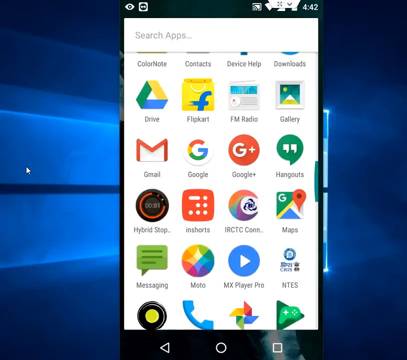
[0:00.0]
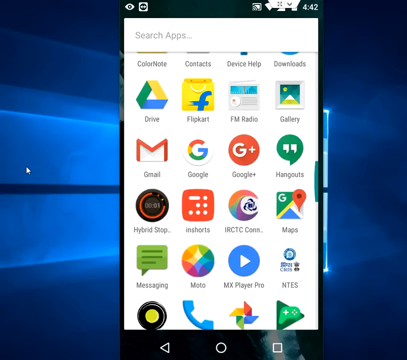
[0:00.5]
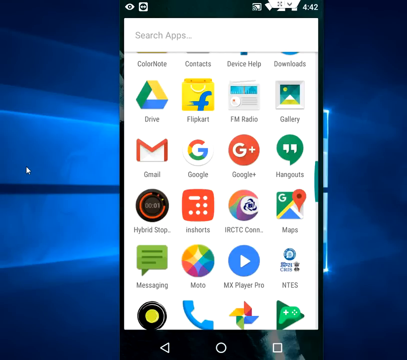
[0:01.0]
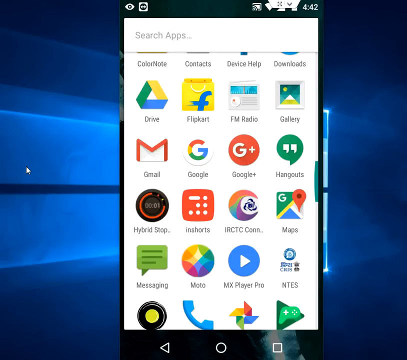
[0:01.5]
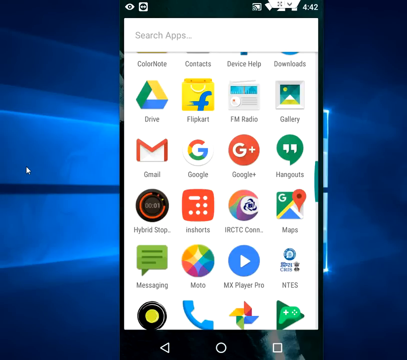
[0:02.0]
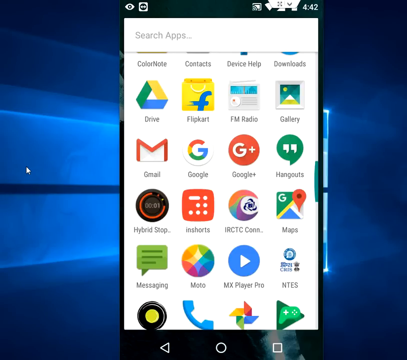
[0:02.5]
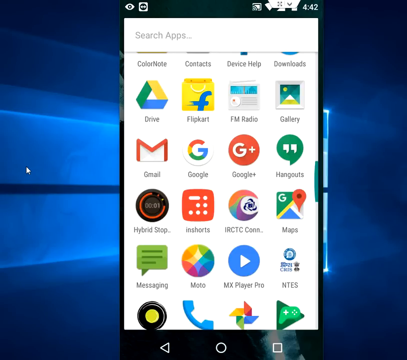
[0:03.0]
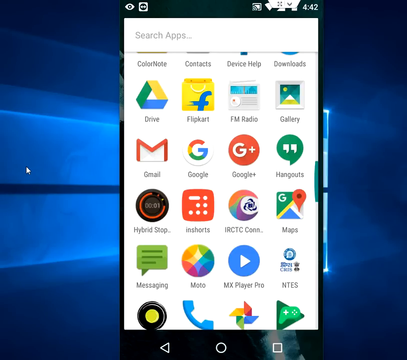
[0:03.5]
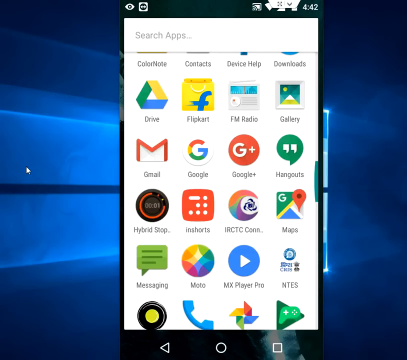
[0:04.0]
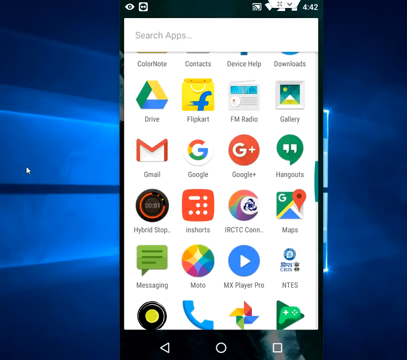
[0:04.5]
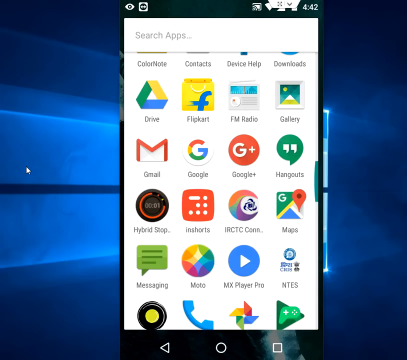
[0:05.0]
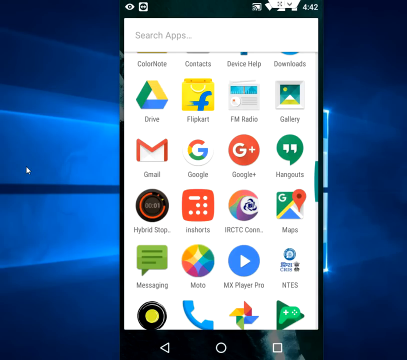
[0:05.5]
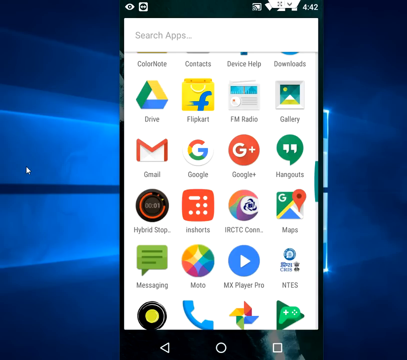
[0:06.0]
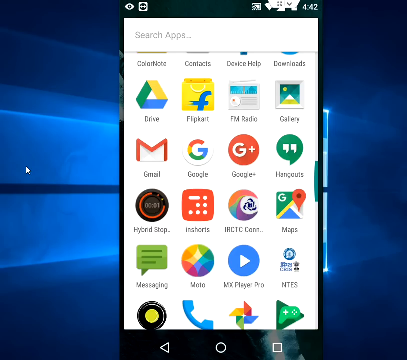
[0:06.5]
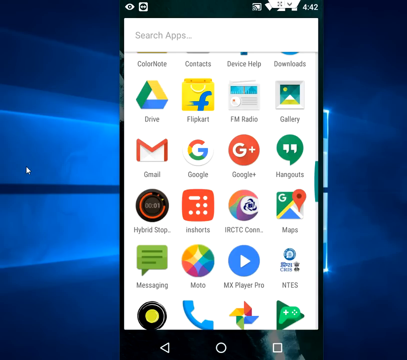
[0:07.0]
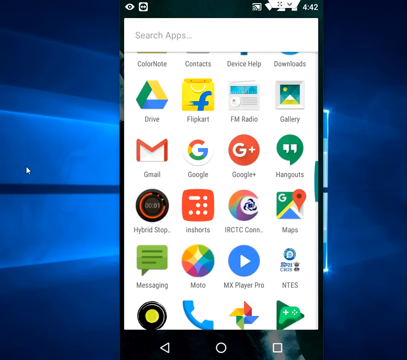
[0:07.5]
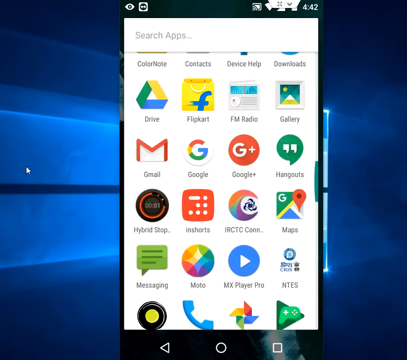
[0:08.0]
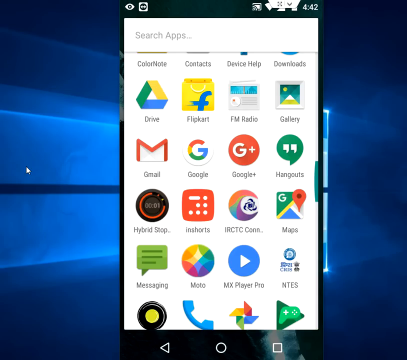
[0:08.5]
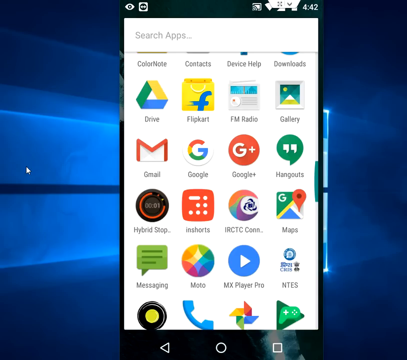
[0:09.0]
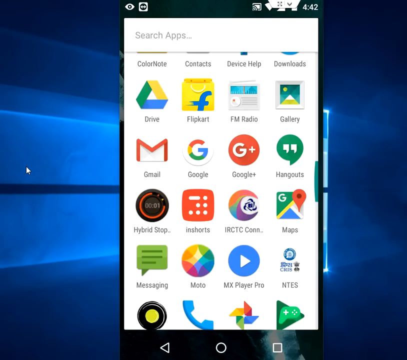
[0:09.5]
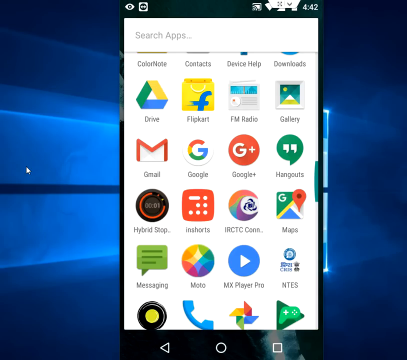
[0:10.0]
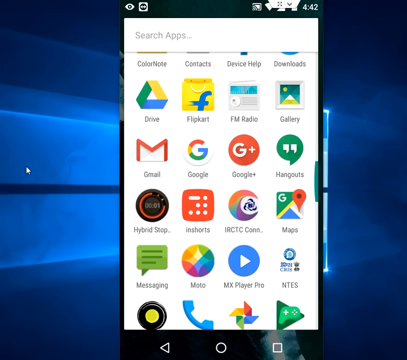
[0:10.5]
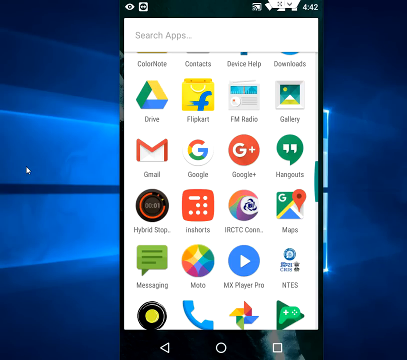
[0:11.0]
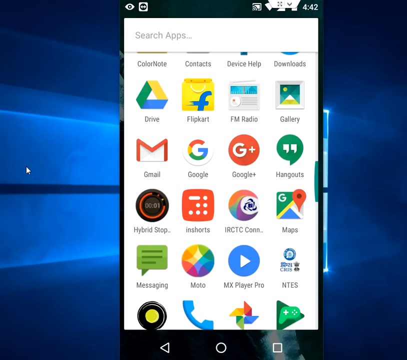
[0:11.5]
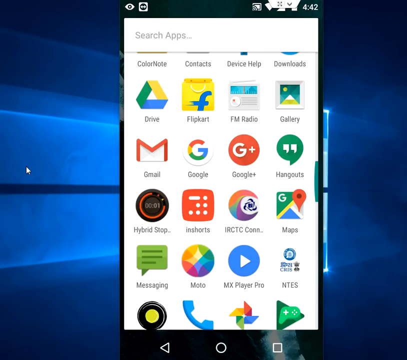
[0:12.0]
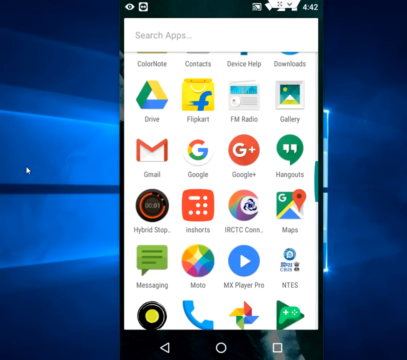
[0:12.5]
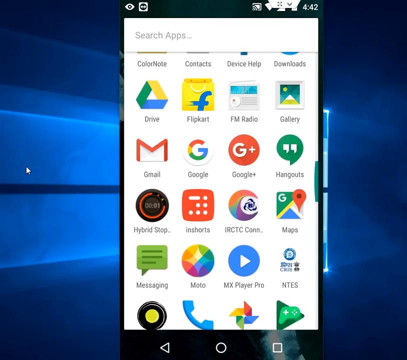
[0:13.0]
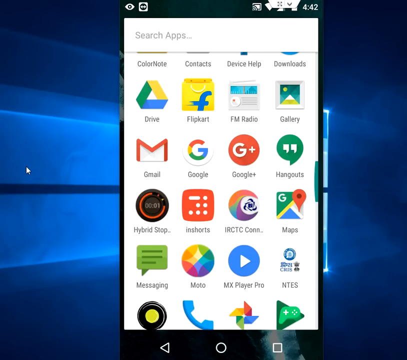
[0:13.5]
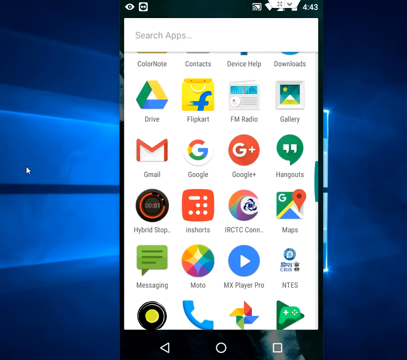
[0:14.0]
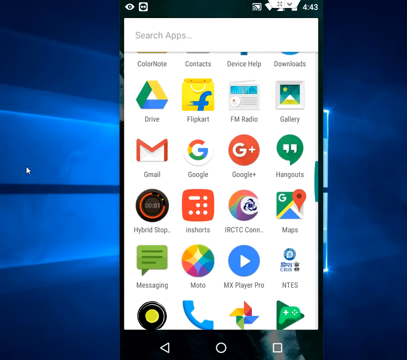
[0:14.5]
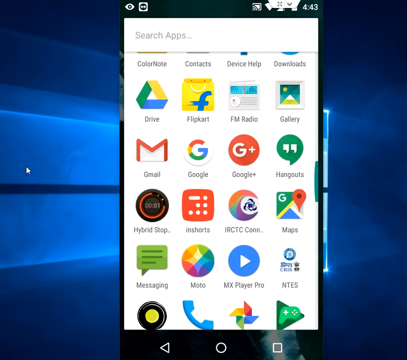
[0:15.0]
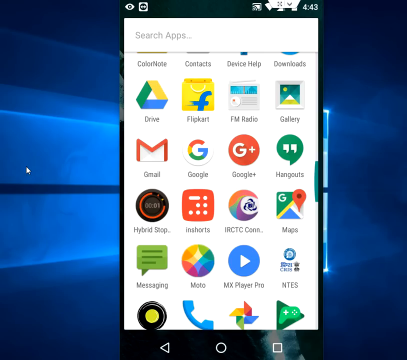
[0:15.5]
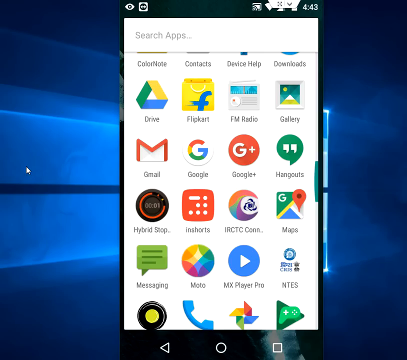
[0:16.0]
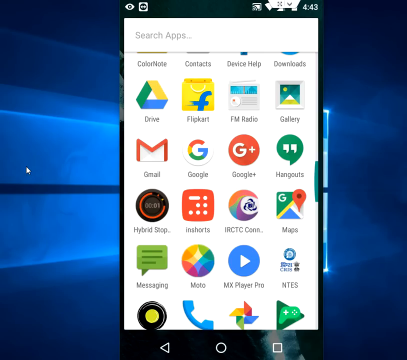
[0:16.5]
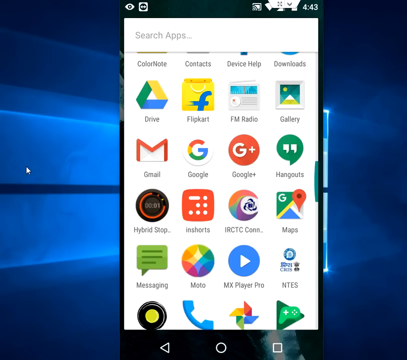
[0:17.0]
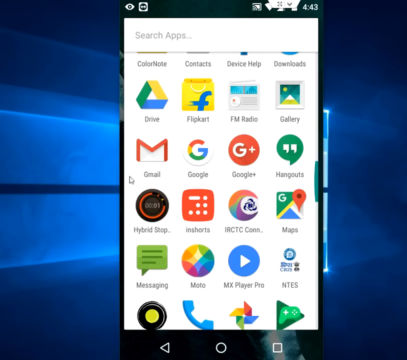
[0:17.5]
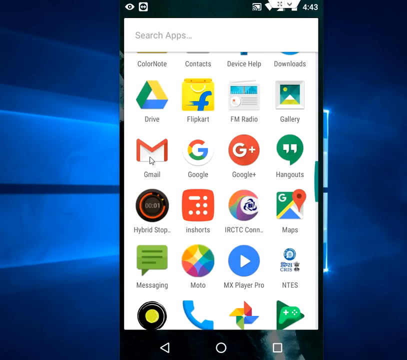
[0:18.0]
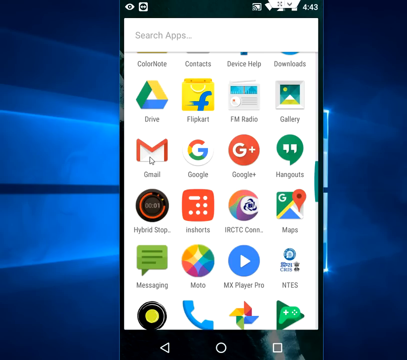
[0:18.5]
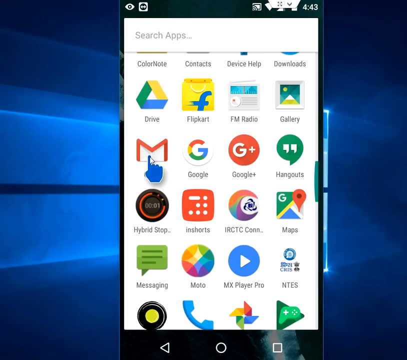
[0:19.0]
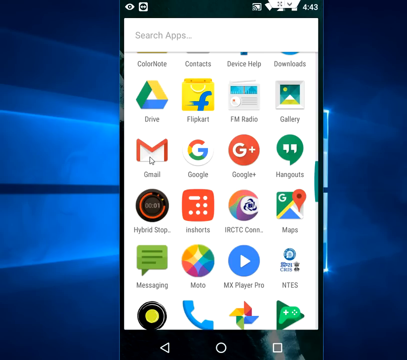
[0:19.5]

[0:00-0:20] A phone screen appears against a blue backdrop. Bright lights shine from the left side of the phone screen, and on the right two very bright vertical lines appear to be in the backdrop behind the phone. At the top the screen reads "442". About one-fourth of the way from the right at the top is a small arrow, with a down arrow and four small dots. Another icon looks like it has an H in it, and there is a black circle on a rectangle. To the left of that is a white box with a white eye. There is a black ribbon. Lower down, the phone screen itself is white and shows "search apps" followed by a list of apps: Color Note, Contact, Device Help, Downloads, Gmail, Google, Google Plus, Hangout, Hybrid Shop, InShort, IRCTC, CONN, Map, Messaging, Moto, MX Player Pro and Night, then a round black circle with a yellow center and a blue phone.